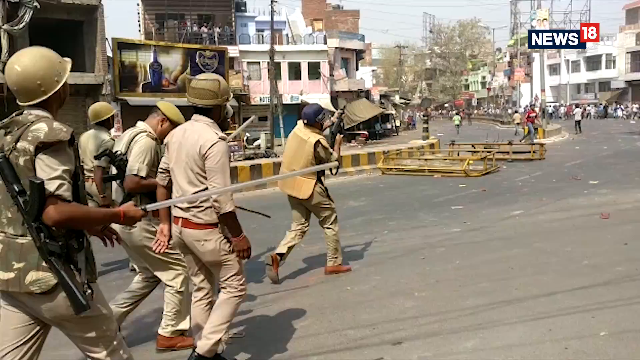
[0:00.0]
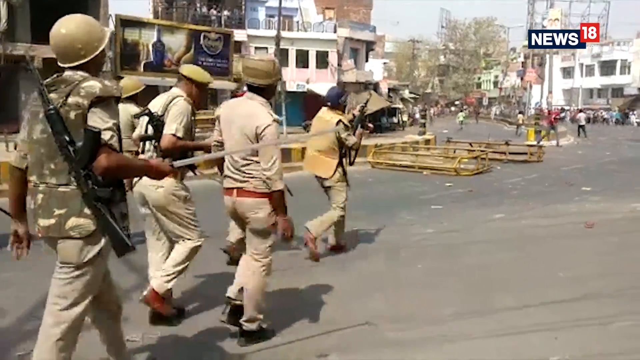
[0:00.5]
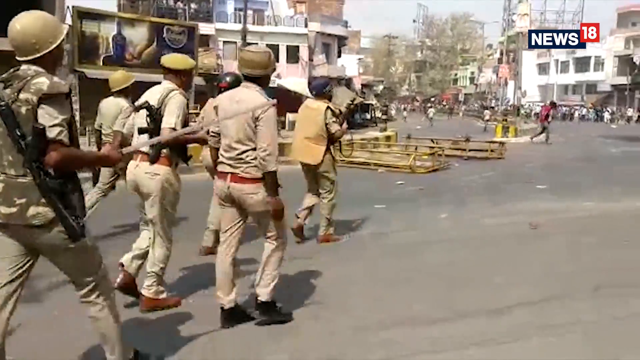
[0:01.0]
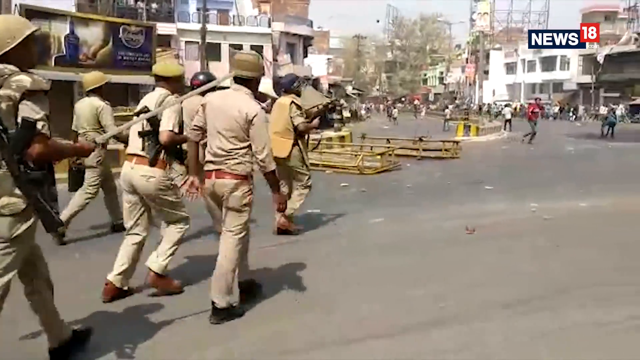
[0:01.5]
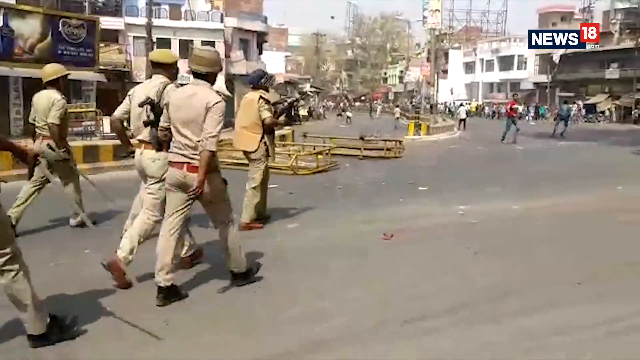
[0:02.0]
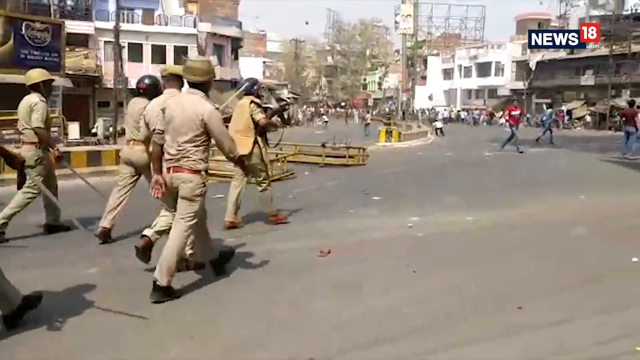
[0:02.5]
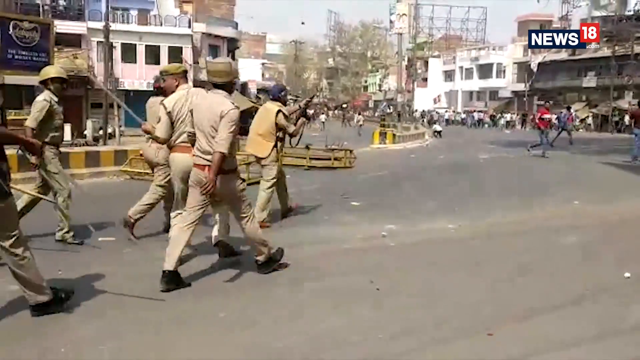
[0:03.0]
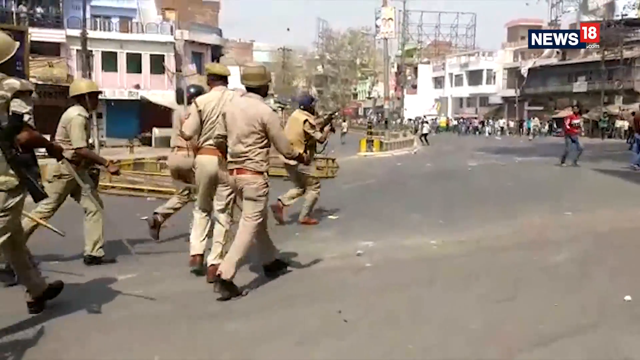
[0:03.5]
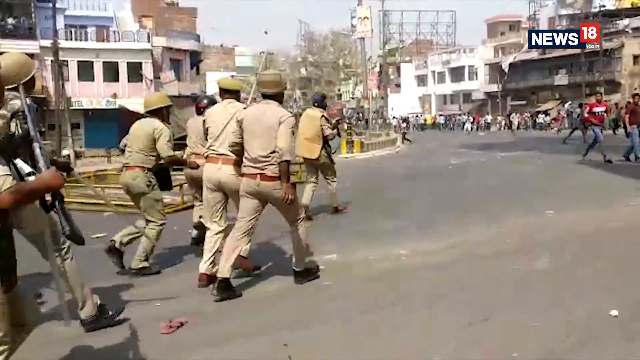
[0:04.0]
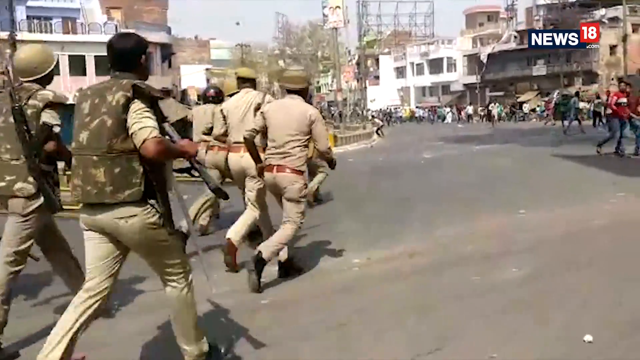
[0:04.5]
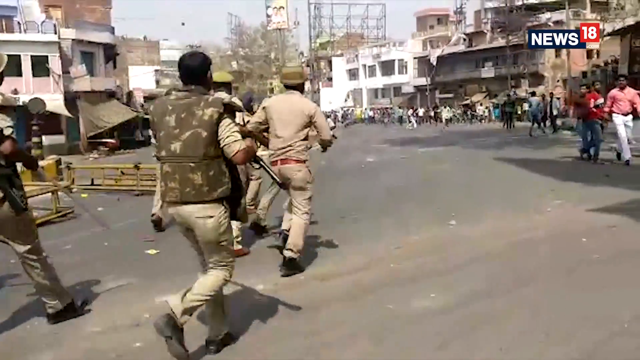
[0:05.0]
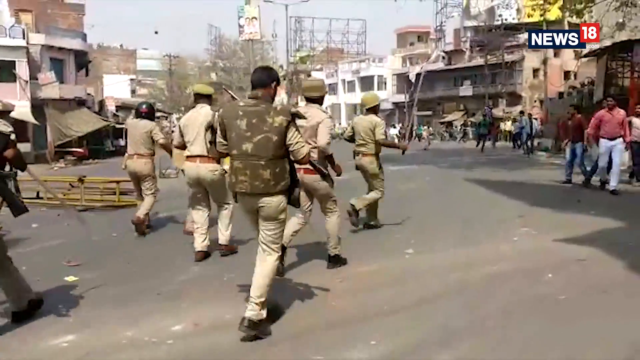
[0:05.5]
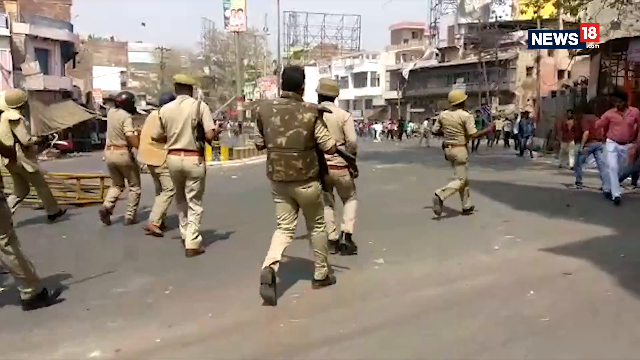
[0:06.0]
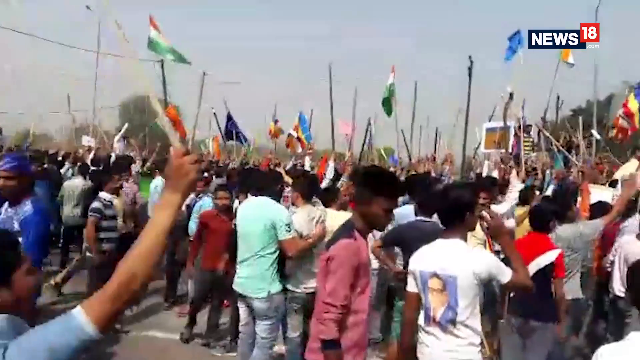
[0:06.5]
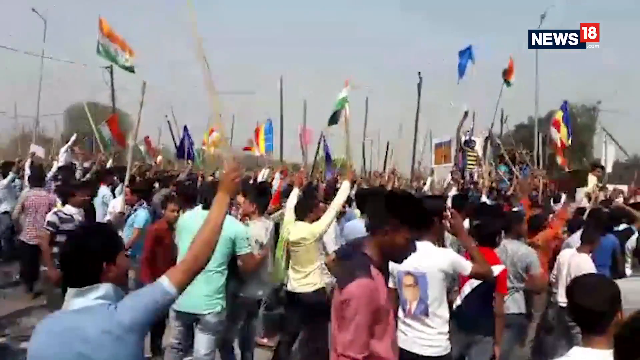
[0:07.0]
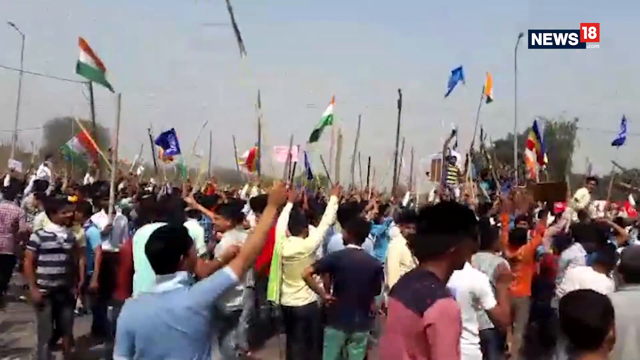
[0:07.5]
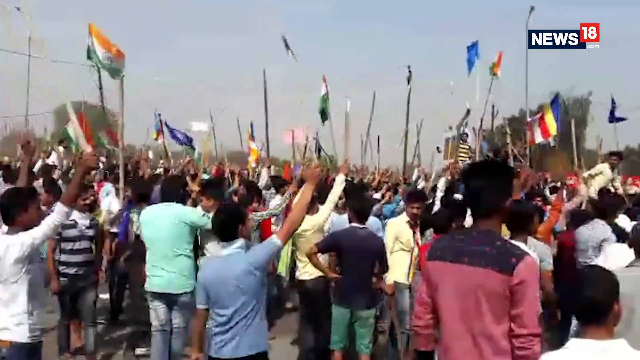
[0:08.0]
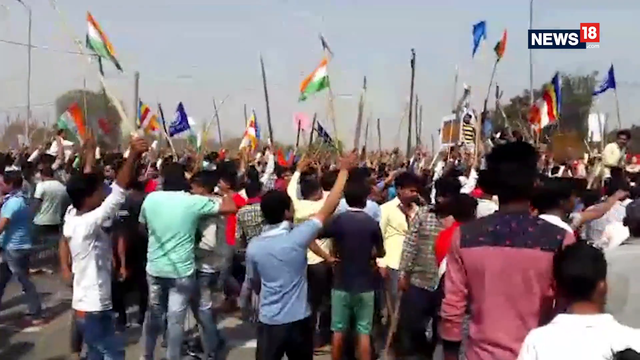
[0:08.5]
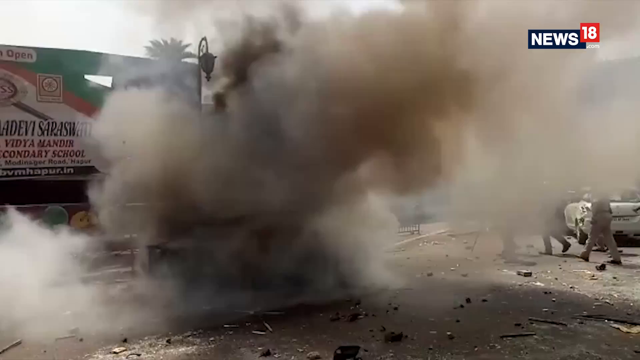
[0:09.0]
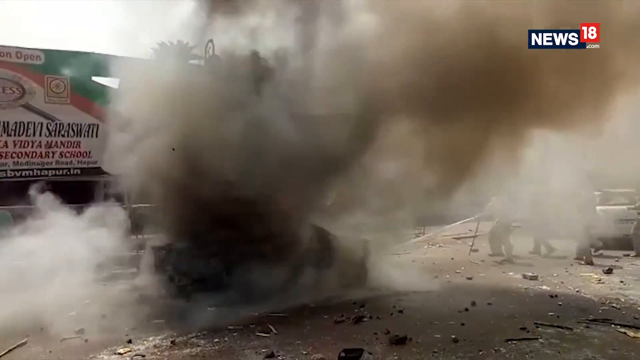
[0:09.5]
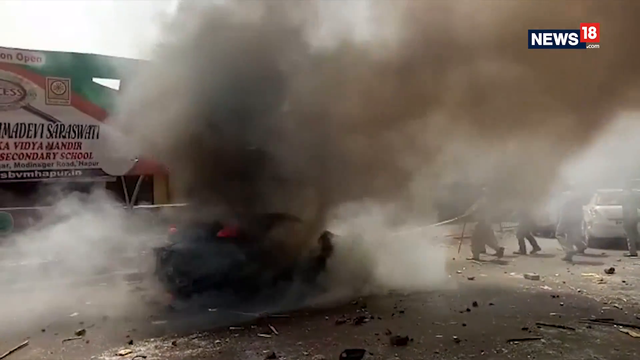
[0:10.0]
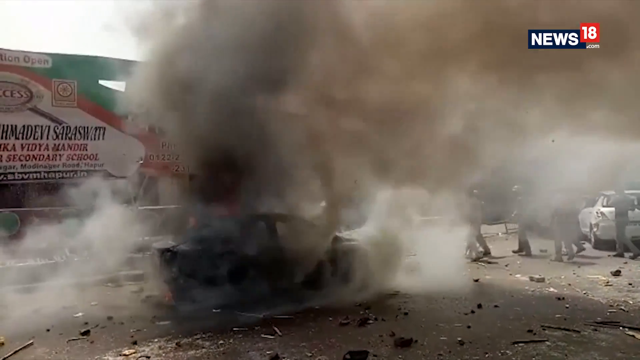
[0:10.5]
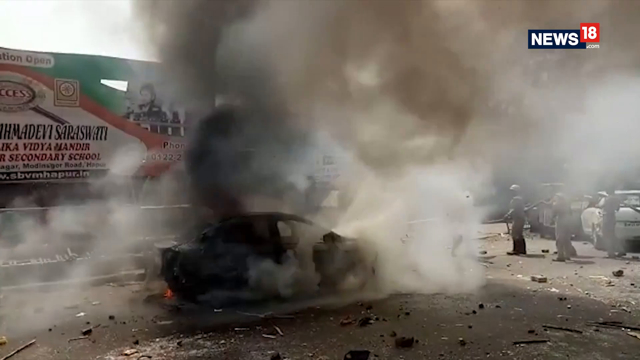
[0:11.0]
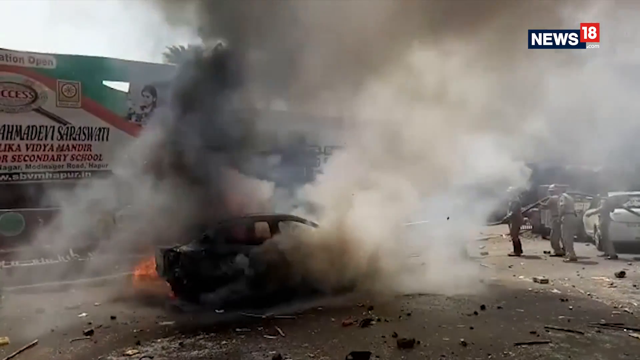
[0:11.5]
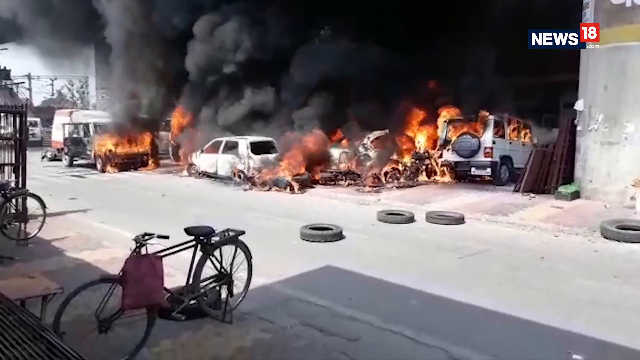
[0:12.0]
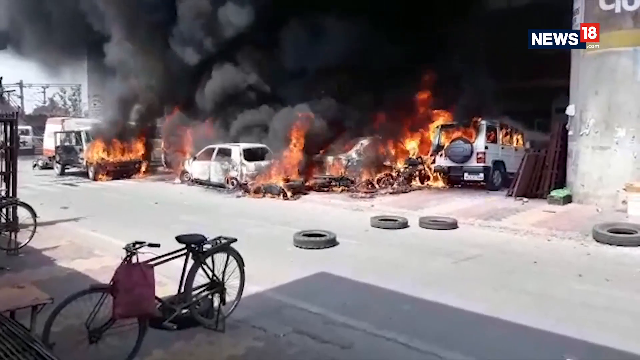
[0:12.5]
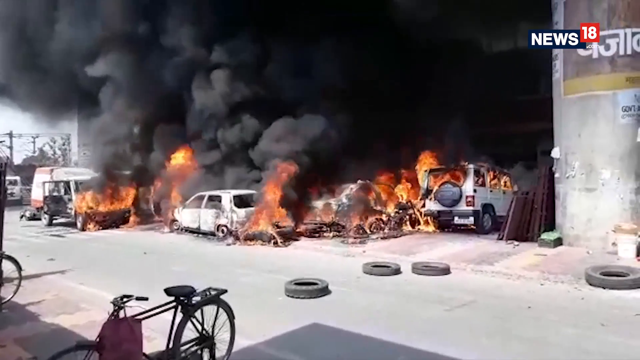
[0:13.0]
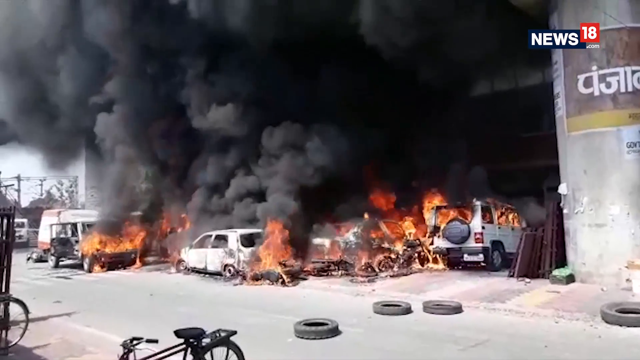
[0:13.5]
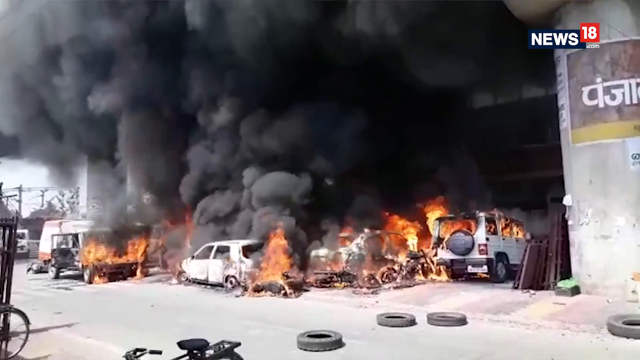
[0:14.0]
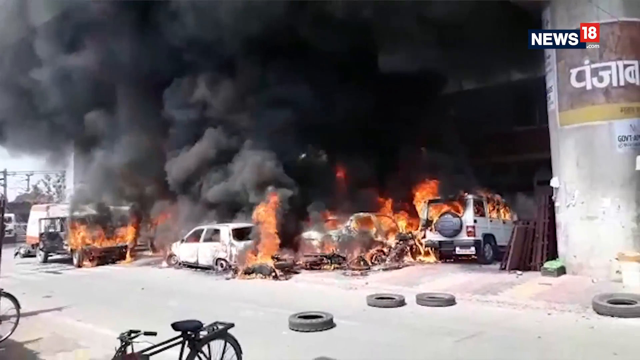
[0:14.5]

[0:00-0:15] The scene appears to be in a foreign country, with people who look like military, dressed in fatigues. The video is titled Bharat Bandh, Why Dalits Took to the Streets to Protest. They march down the street in what looks like a very chaotic scene, carrying automatic weapons, and then they run. A protest is going on: people hold up flags, vehicles are on fire, and there is black smoke. A reporter is shown talking, followed by more scenes of the protest. The video is from News 18, and text reads "automatic arrests and registration of criminal complaints would not be allowed under the SC-ST Prevention of Atrocities Act 1989". Text then reads "Modi government has filed a review petition against the Supreme Court verdict", and different leaders are shown. Protests turn violent in some places, with cars that have been set on fire, debris, and people marching in the streets holding up flags.